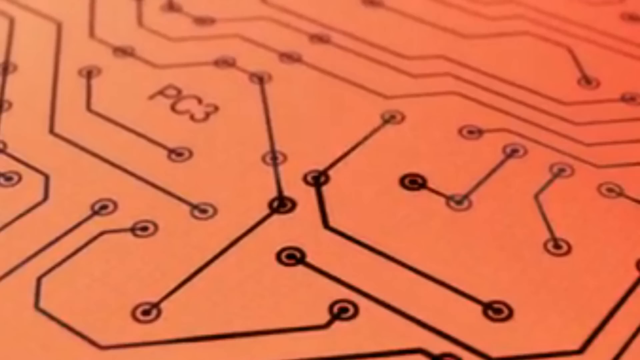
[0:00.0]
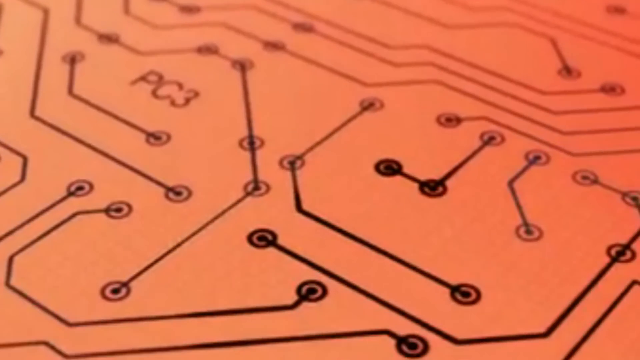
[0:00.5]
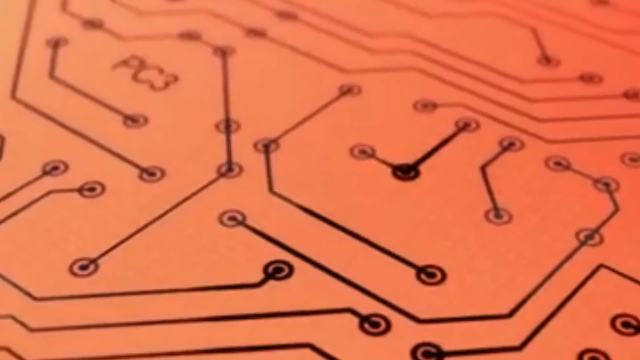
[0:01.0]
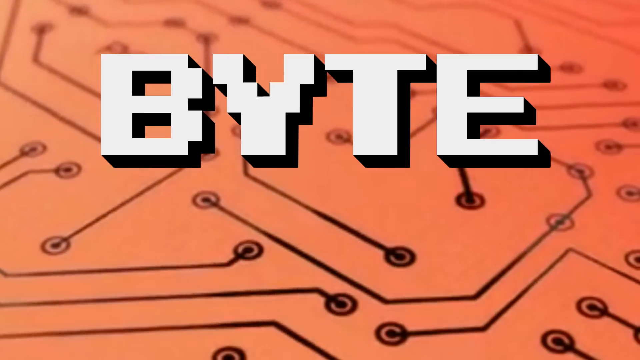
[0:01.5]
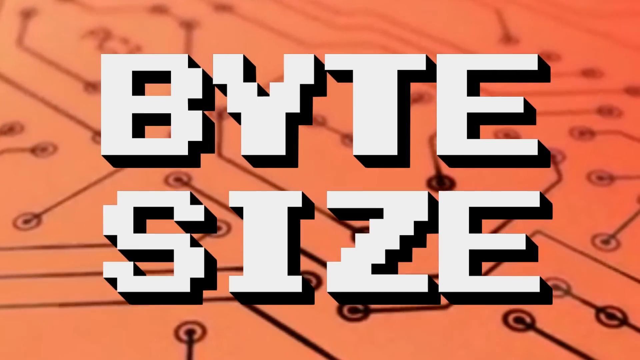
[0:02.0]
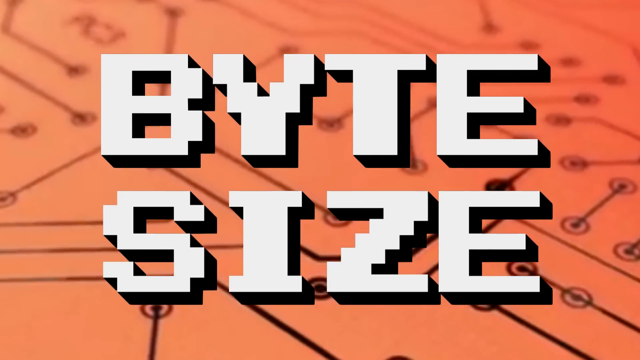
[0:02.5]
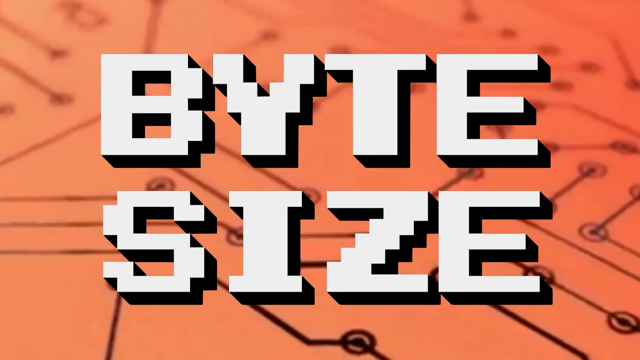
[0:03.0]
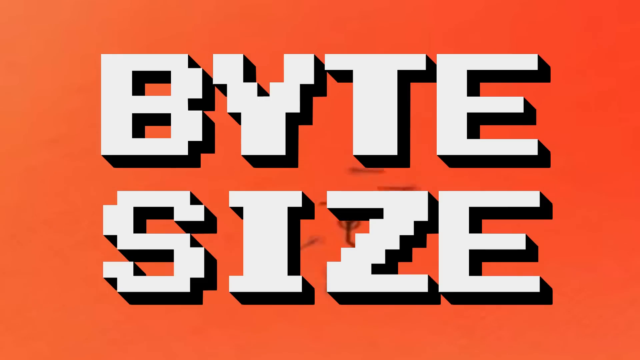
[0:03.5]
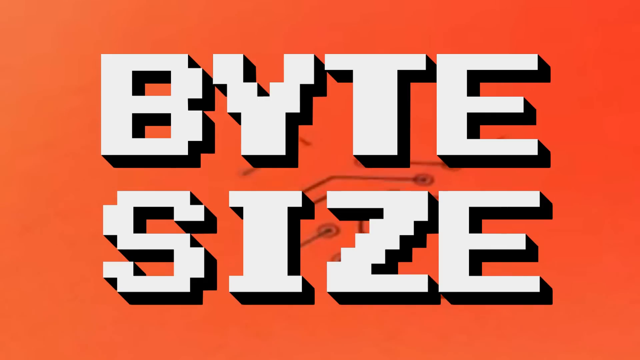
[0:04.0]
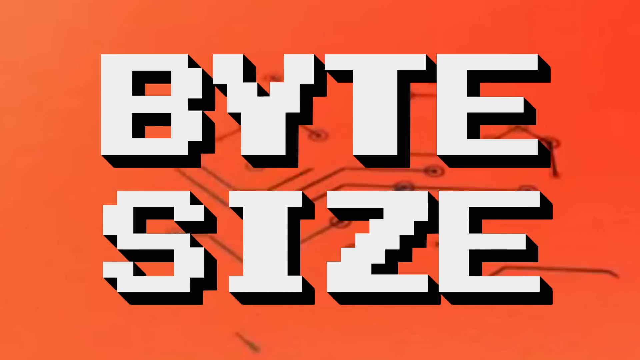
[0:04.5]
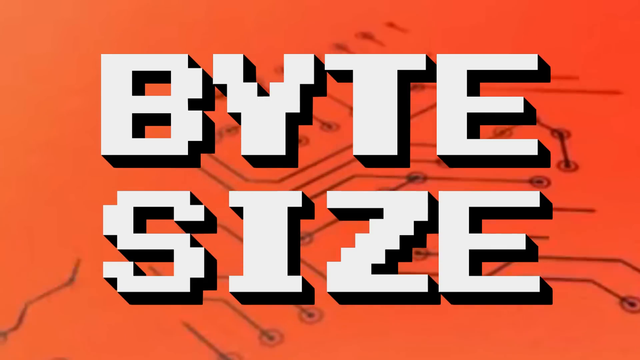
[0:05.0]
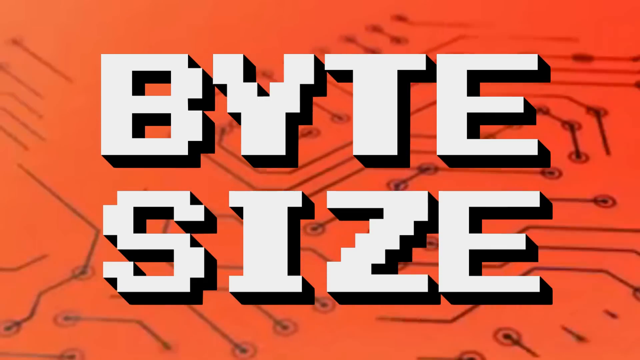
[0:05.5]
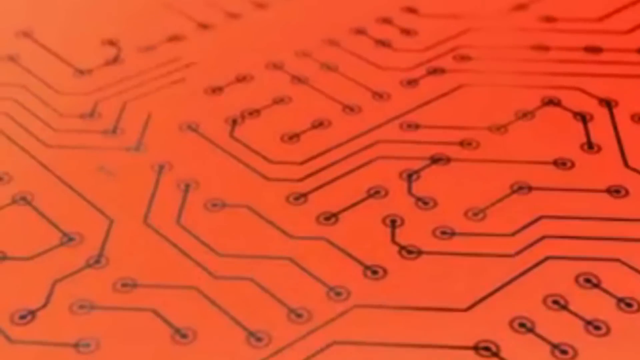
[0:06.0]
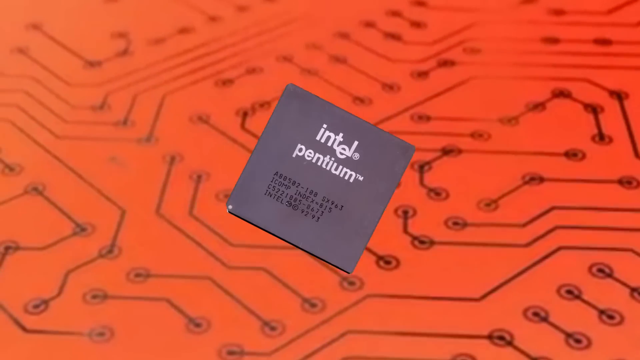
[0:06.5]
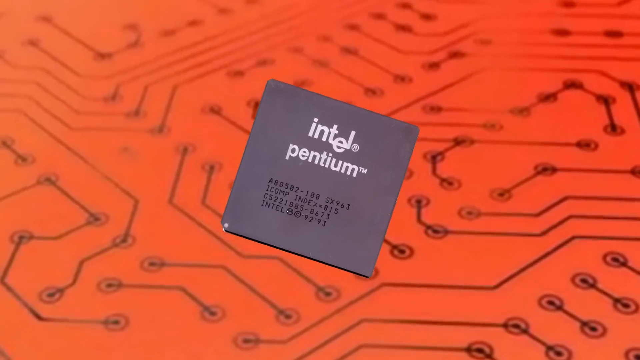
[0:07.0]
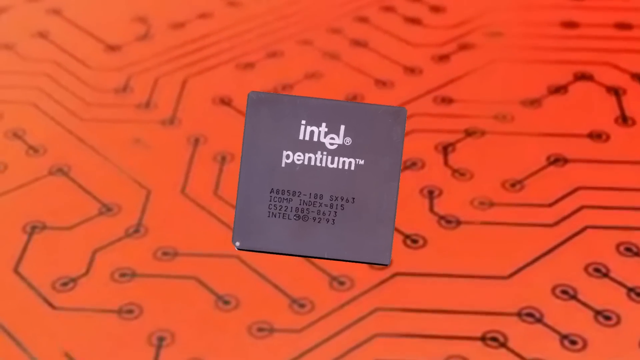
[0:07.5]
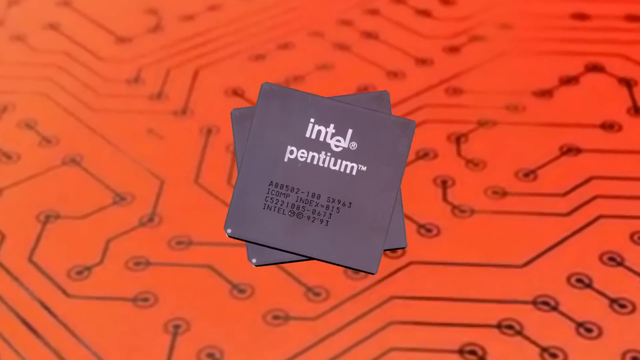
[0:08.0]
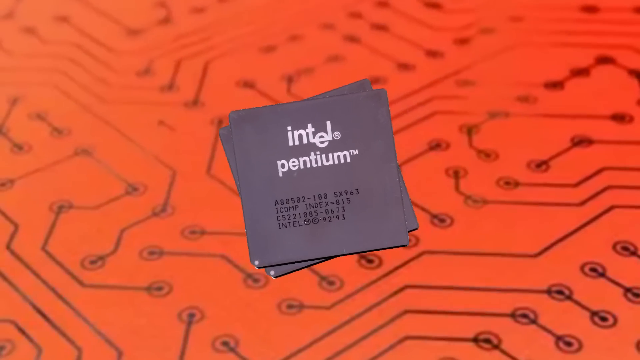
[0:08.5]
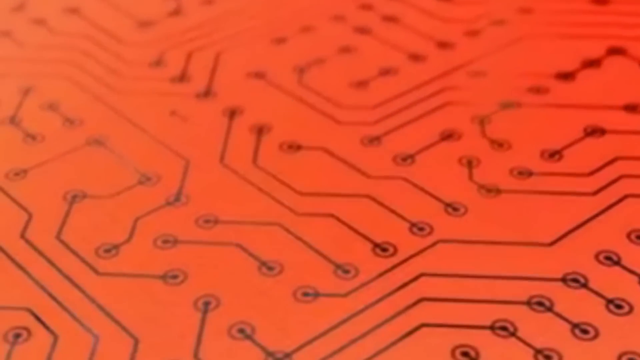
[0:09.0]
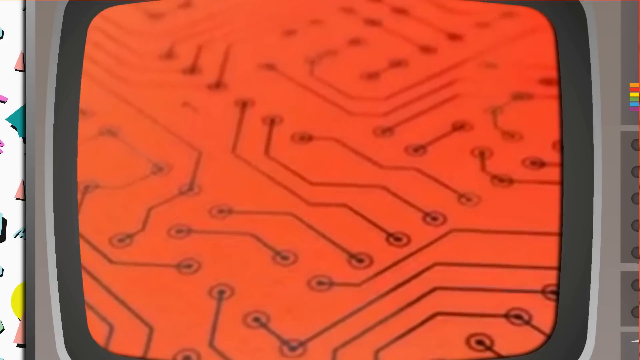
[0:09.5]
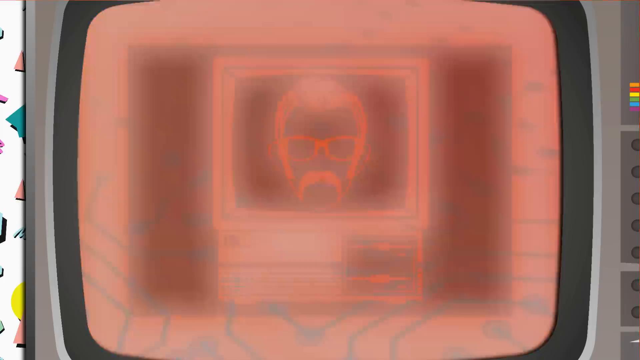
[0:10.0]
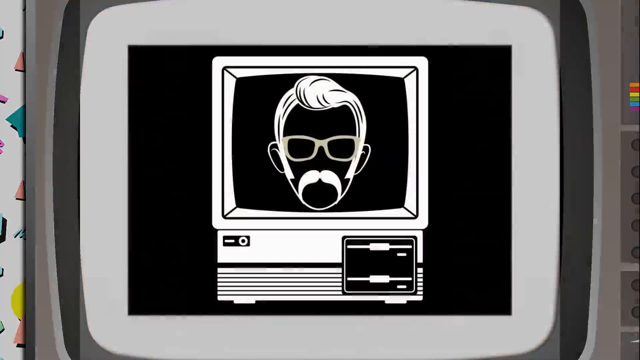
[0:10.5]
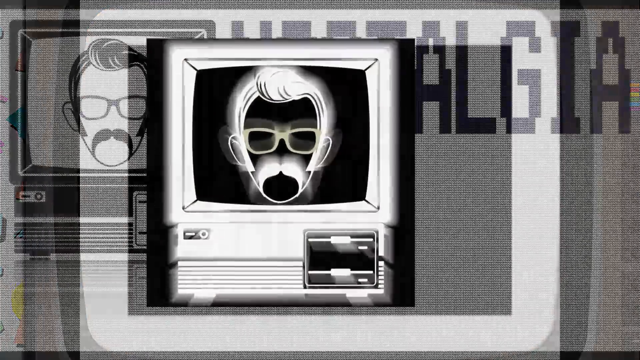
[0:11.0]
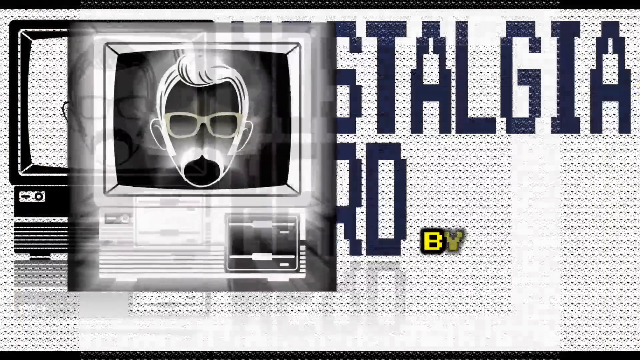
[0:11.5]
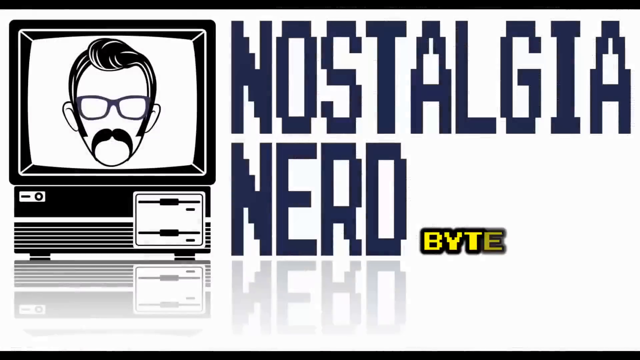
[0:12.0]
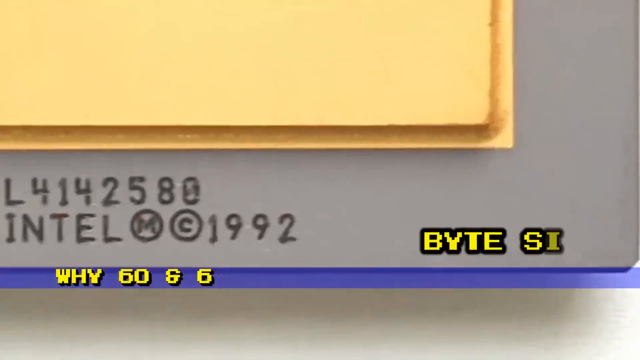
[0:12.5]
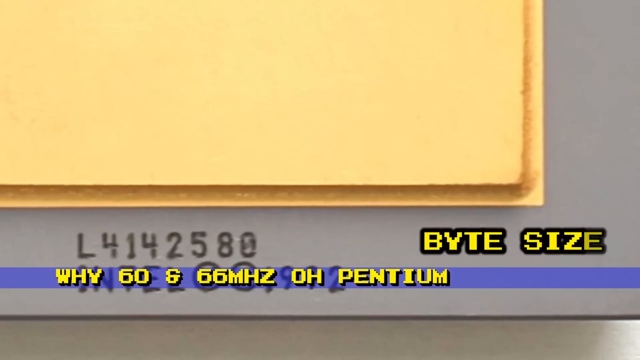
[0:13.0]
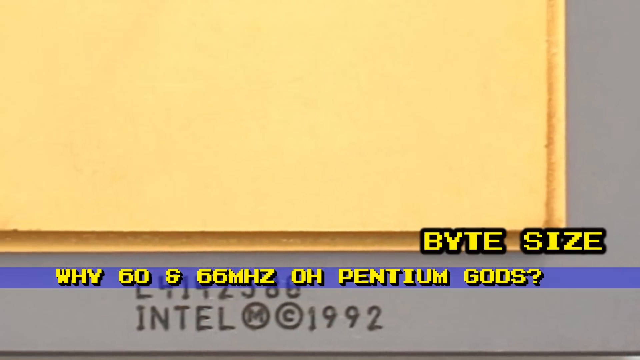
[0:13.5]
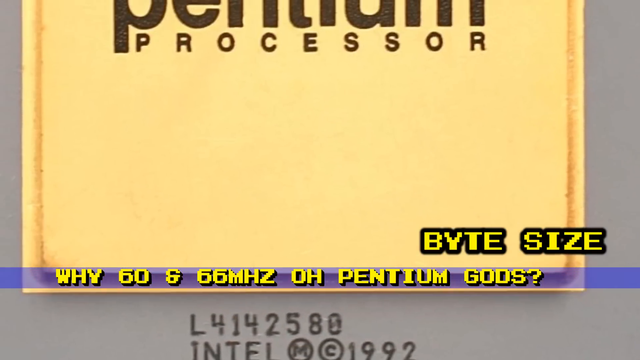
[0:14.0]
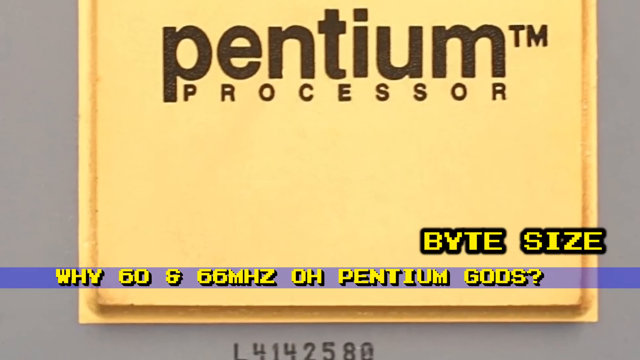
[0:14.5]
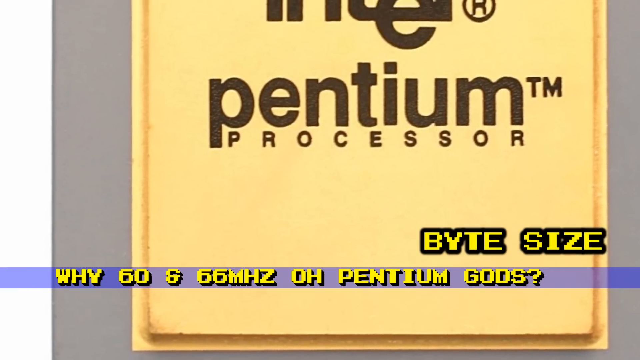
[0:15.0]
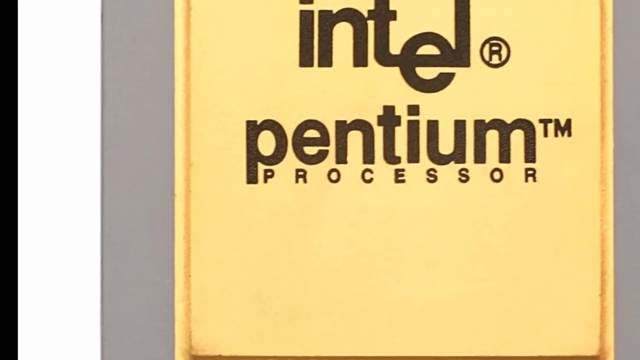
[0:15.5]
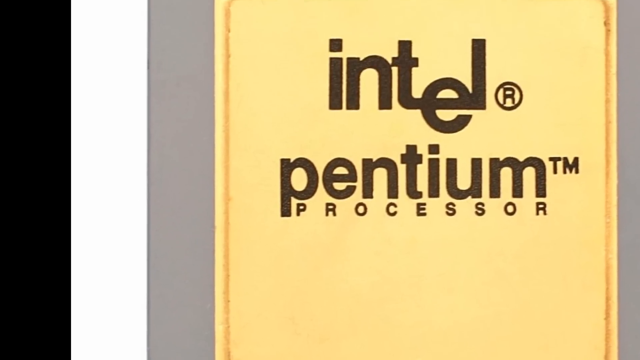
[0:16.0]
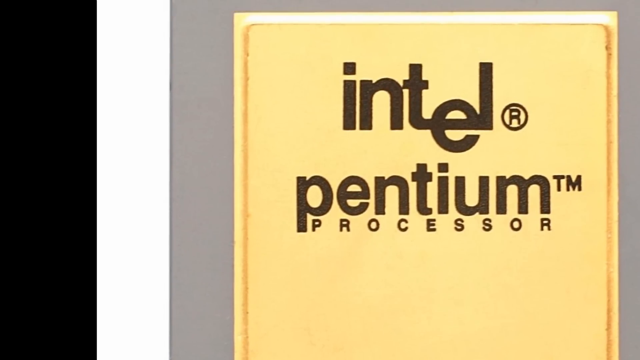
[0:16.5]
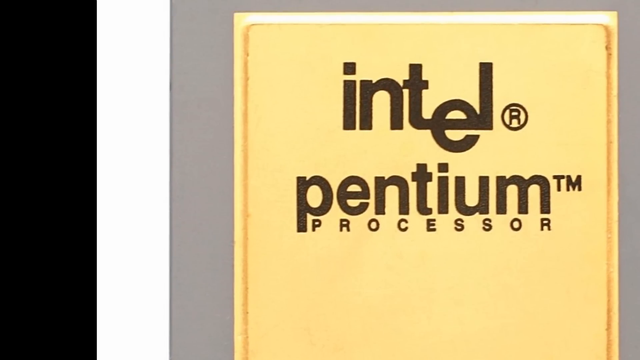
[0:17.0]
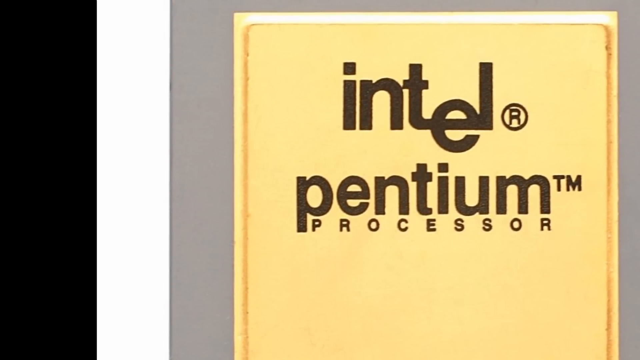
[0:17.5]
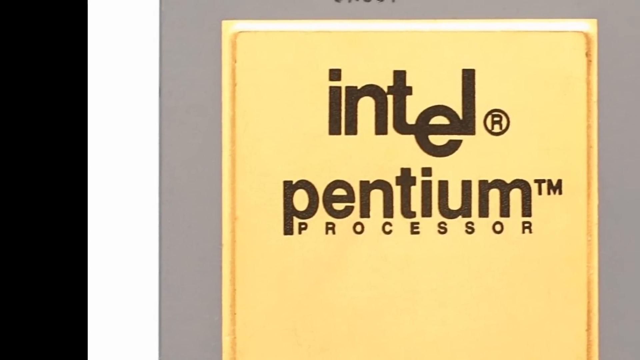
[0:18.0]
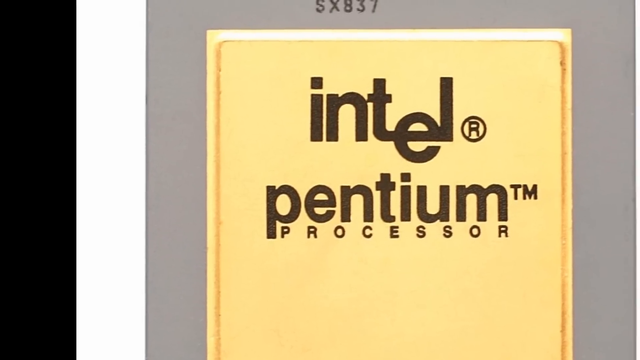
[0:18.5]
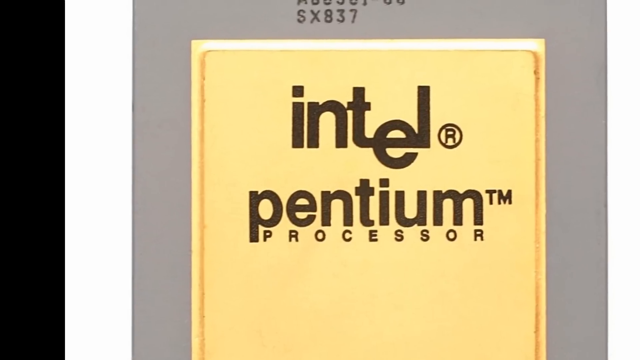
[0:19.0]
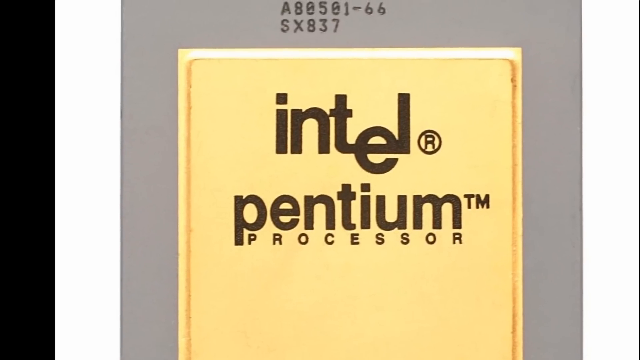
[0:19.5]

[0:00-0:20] The video opens on a coral background with what looks like some type of diagram: little circles with lines in their centers, some of which connect all over while others are shorter, covering most of the page. The camera sort of slowly moves through it. Pixelated text appears that says "bite size," and the view continues to move over the coral background. Gray cards then appear that say "Intel Pentium" in white, with what looks like possibly a copyright or trademark at the bottom. All three cards turn until they form one. A TV then comes onto the screen, resembling the older, really thick ones with buttons on them, and a black-and-white image comes over it showing a cartoon silhouette of a male wearing glasses with his hair slicked up on the very top, followed by something about Nostalgia Nerd.